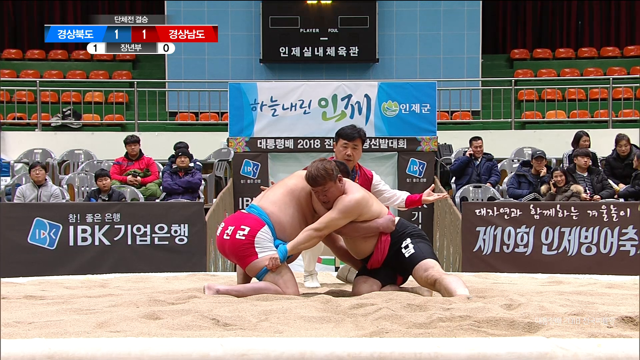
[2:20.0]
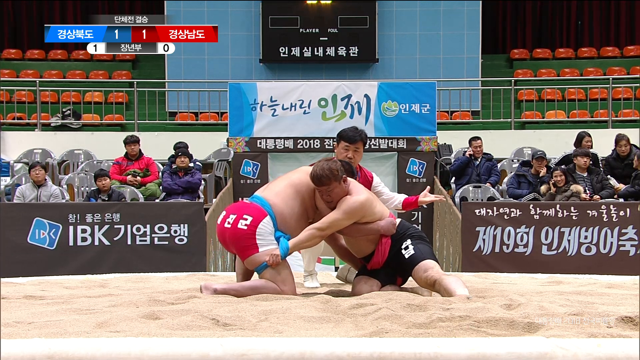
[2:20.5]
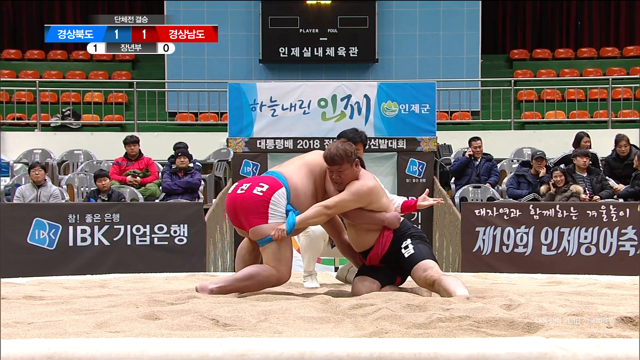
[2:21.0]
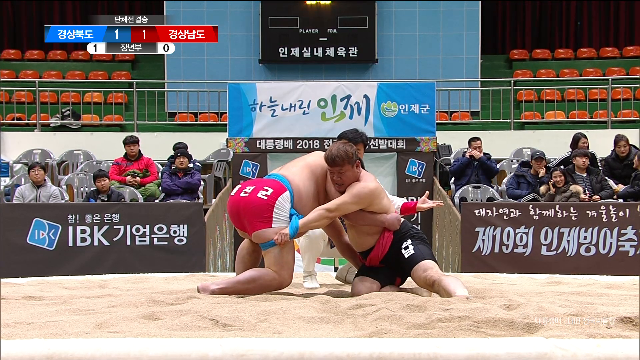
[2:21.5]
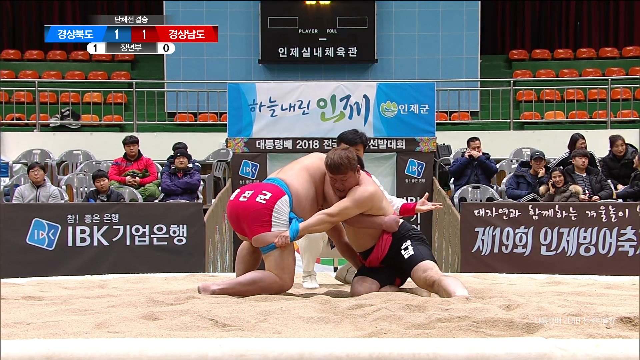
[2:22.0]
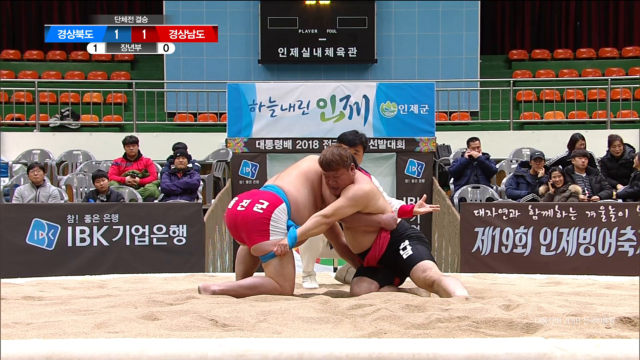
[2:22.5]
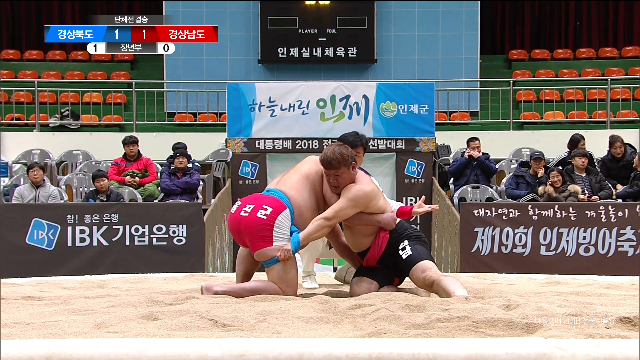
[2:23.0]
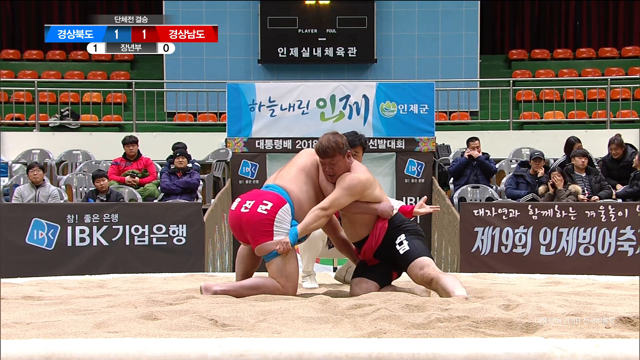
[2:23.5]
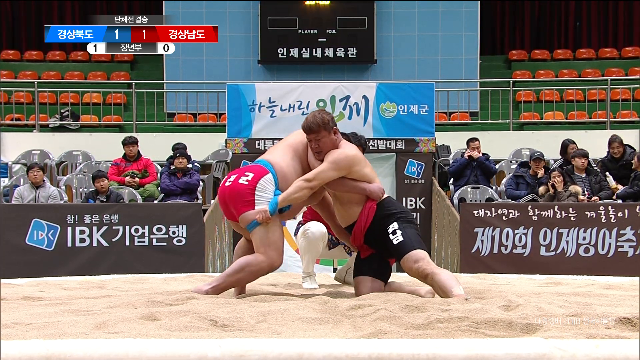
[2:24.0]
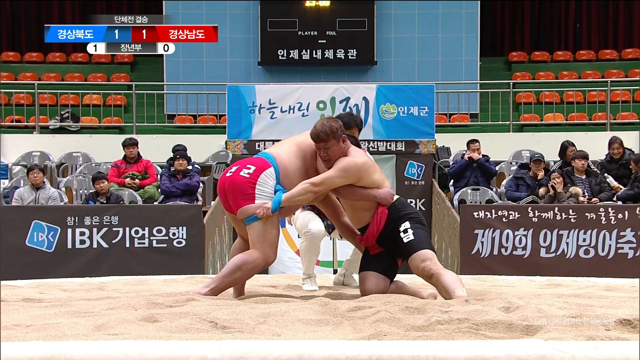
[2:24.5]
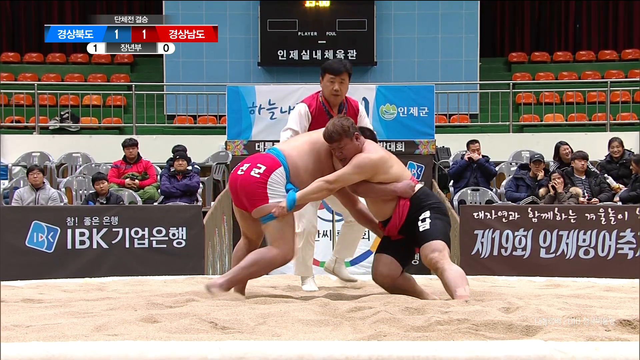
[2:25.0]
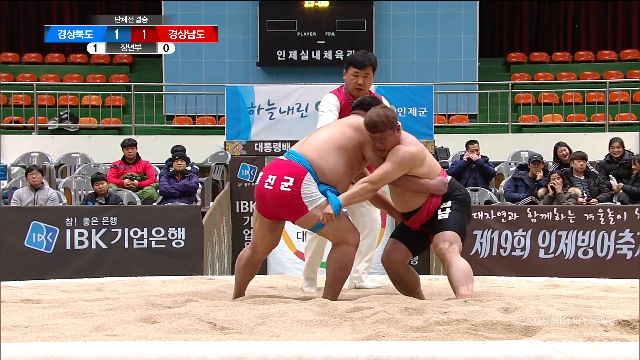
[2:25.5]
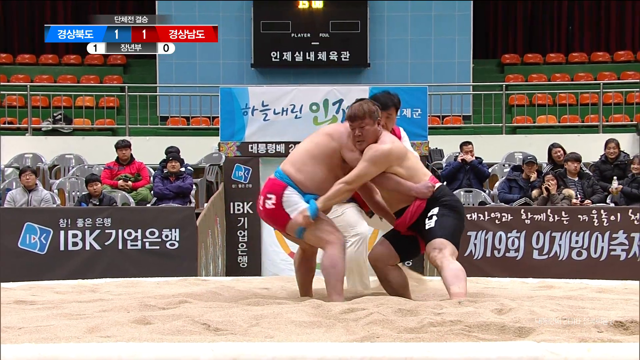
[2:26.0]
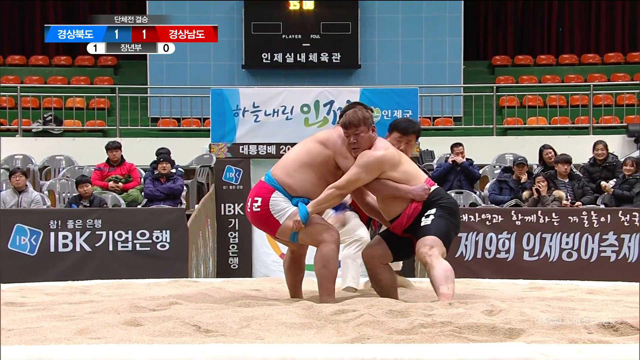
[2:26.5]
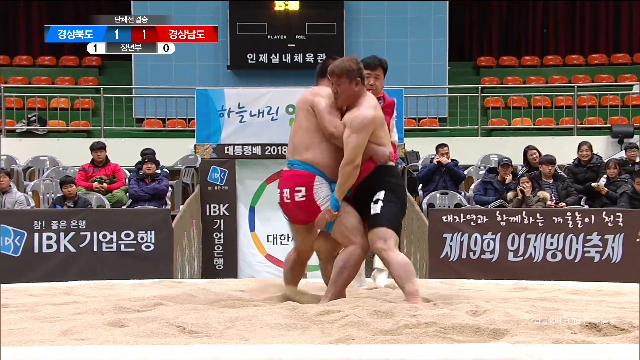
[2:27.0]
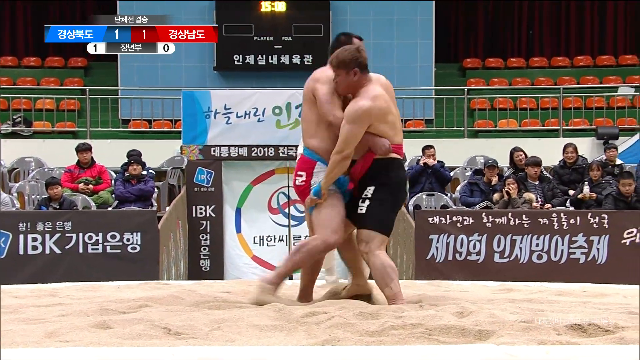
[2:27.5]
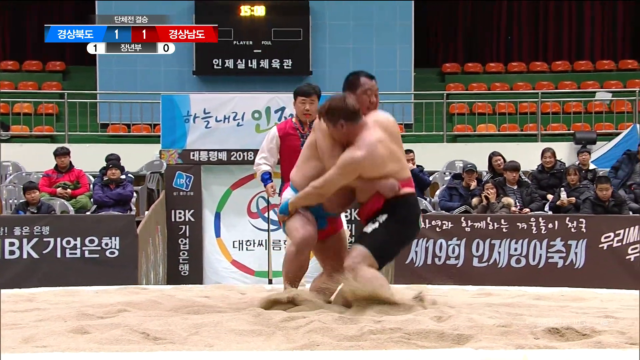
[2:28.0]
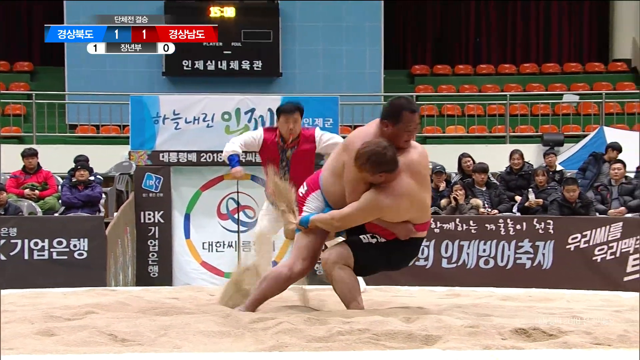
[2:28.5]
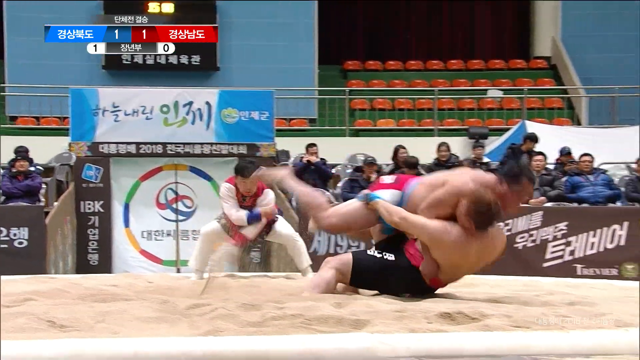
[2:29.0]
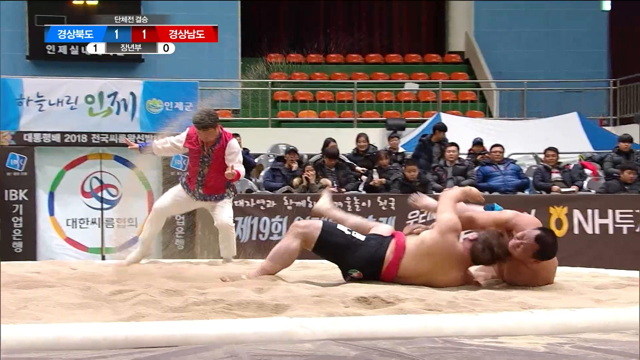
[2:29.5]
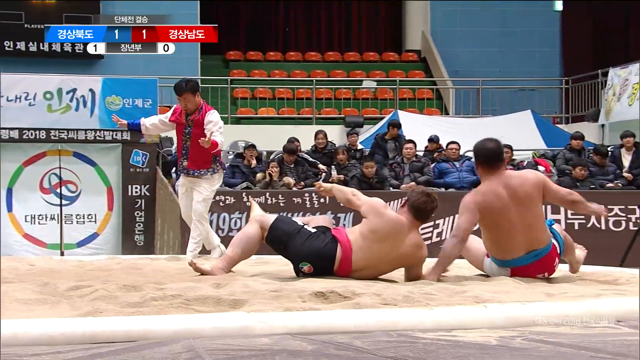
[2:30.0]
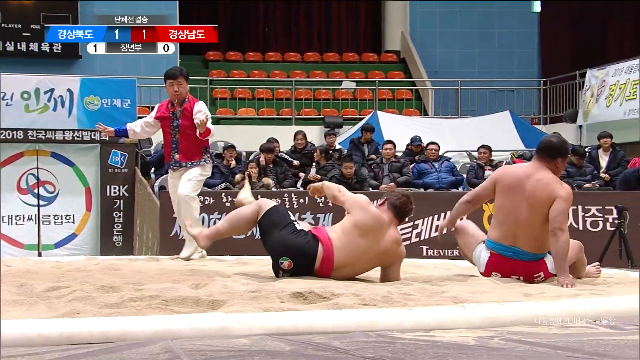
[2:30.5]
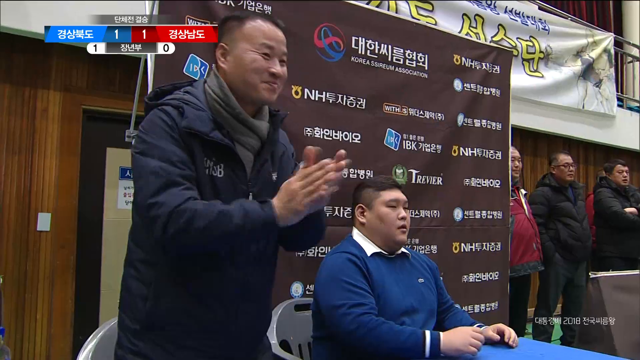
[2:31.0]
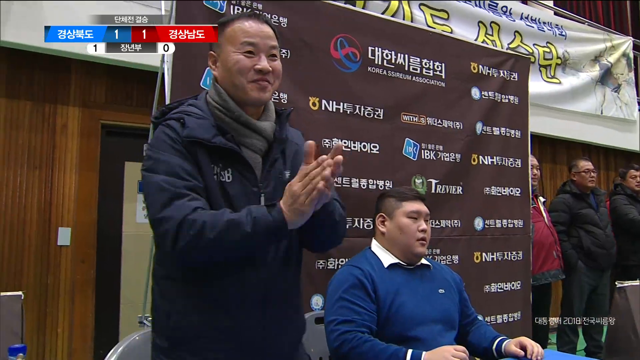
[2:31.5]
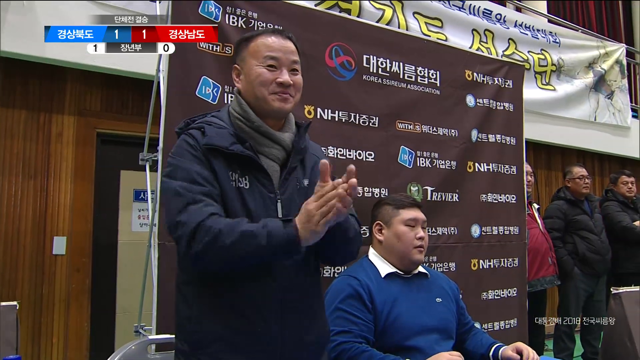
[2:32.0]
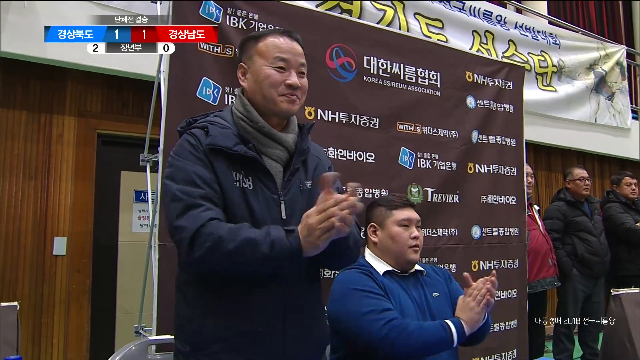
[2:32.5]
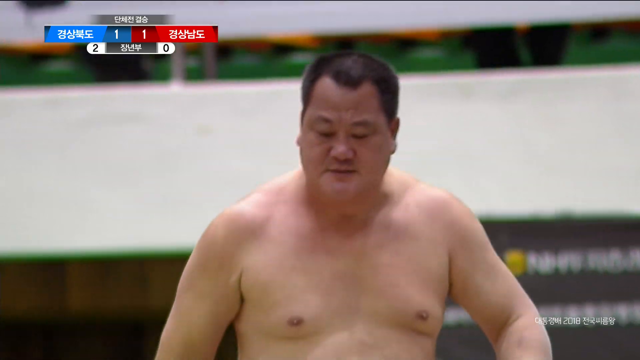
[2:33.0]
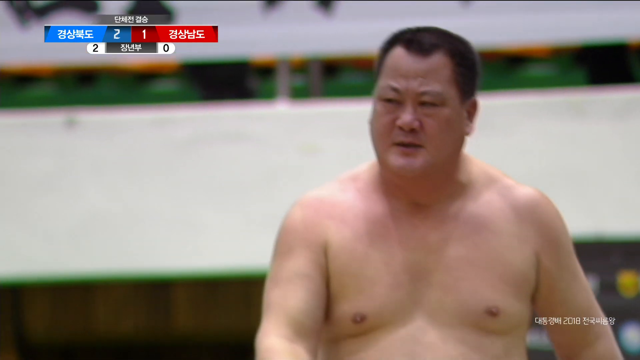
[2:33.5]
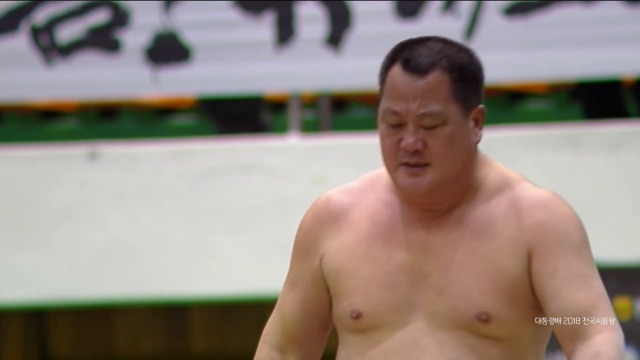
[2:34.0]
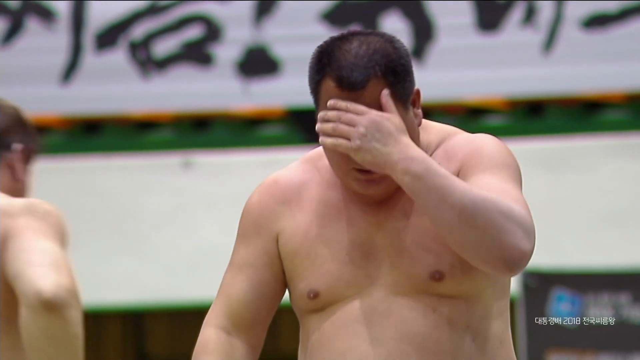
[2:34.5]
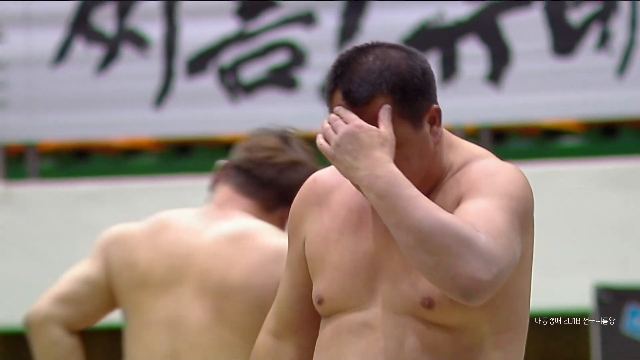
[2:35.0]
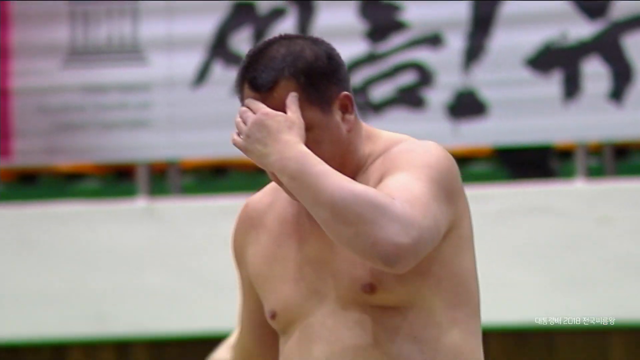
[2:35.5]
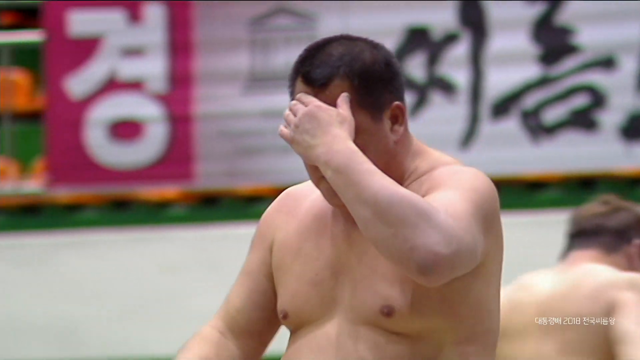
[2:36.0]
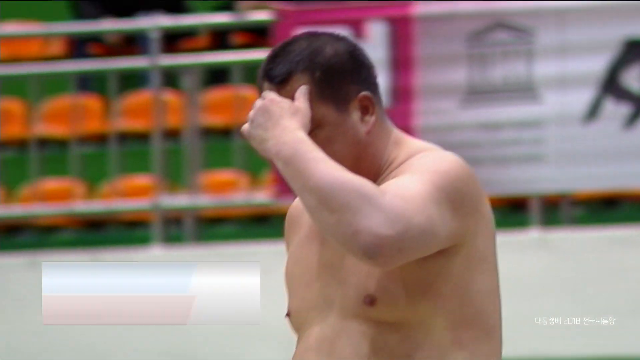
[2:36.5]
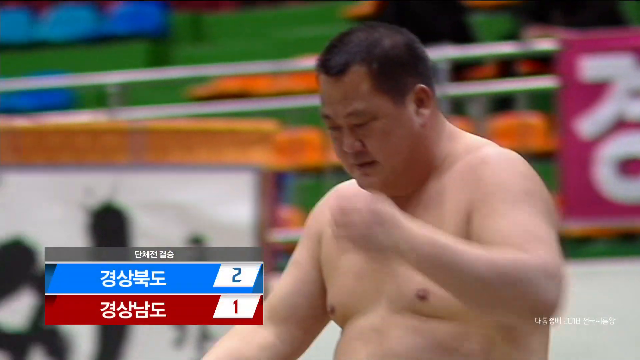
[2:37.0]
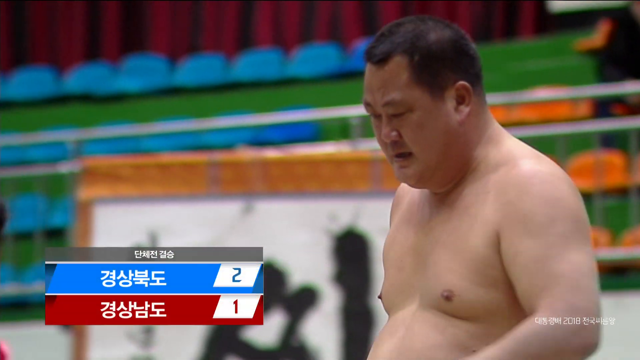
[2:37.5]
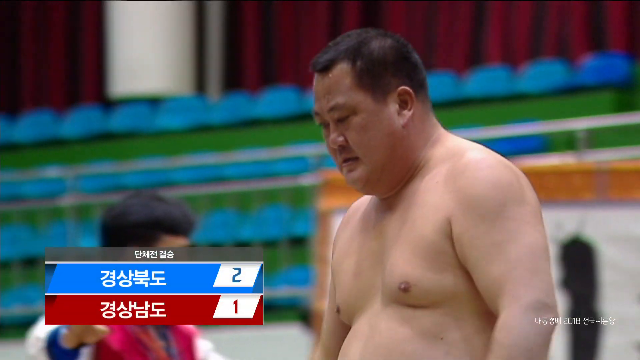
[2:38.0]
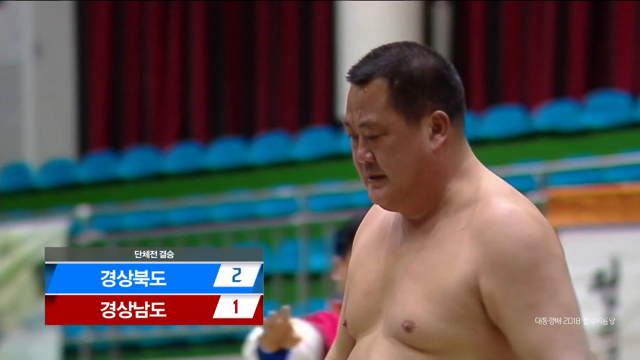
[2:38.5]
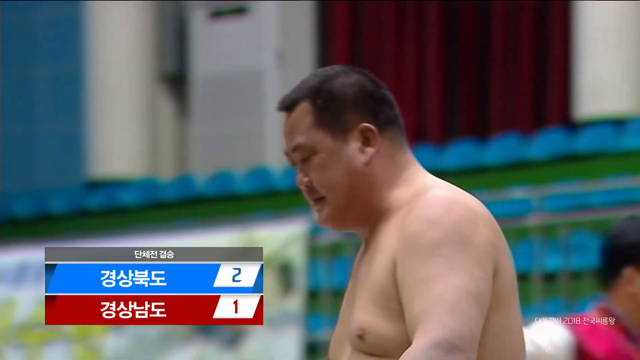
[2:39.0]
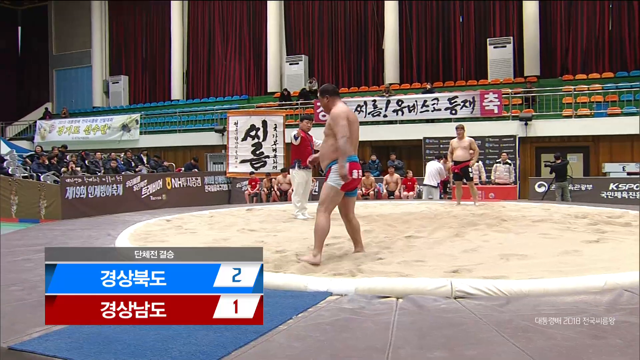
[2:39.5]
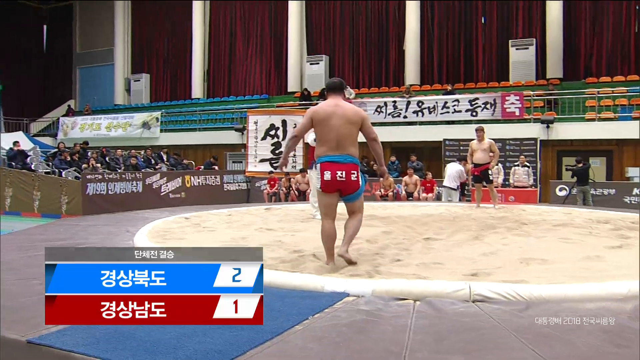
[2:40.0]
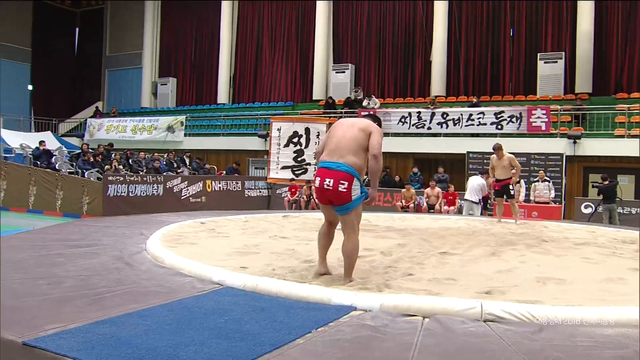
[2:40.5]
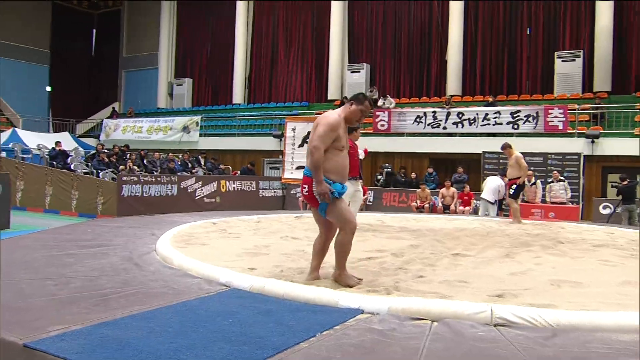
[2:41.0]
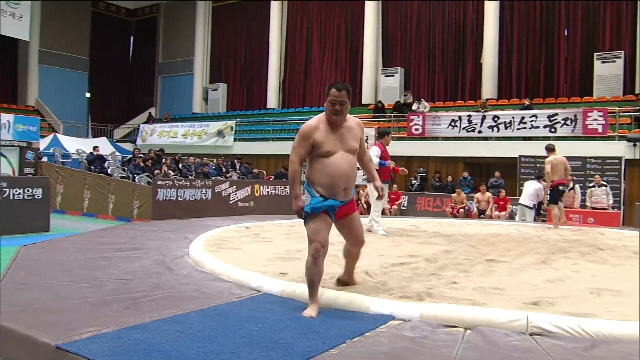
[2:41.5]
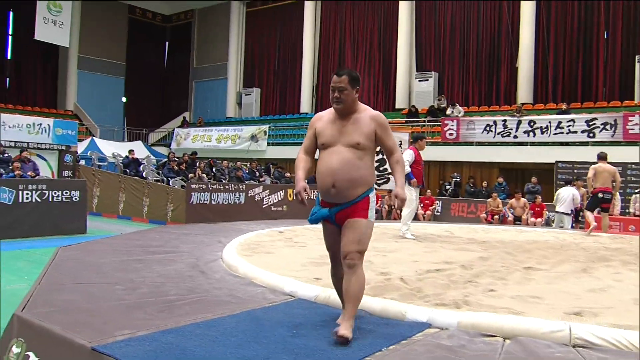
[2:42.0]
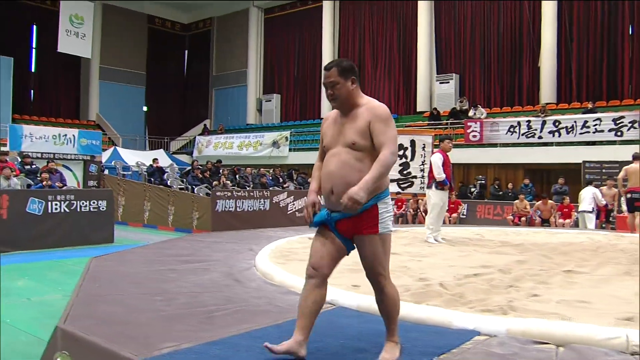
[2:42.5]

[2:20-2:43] The wrestler on the left with the blue scarf tries to get up onto both feet but cannot, and goes back down on one knee. Then both start to get up: the wrestler on the left with the blue scarf manages to get onto both feet, and so does the wrestler on the right with the red scarf. Standing upright, they pull on each other. The man in the black shorts falls backwards and tosses the other wrestler over his shoulder. The two men at the blue table clap, one of them standing up to clap. The score shows "blue two", while red has only one. The wrestler with the blue scarf walks off and again puts his left hand up to his forehead. As he walks off, the referee in the background holds both arms outstretched and both wrestlers are standing. They walk to the edge of the sandy circle, look at each other and give a slight bow before turning around and walking off.